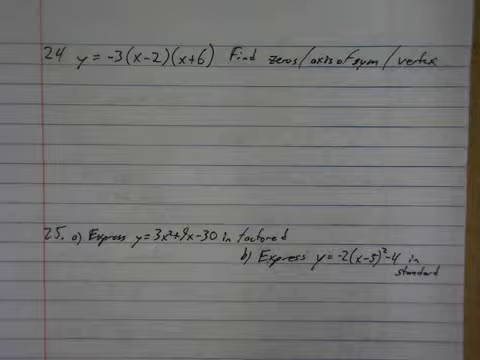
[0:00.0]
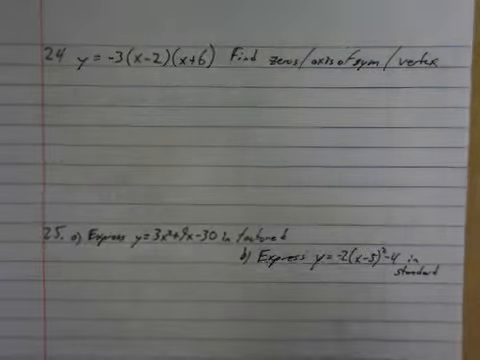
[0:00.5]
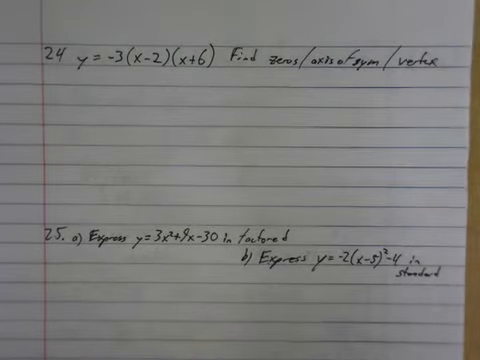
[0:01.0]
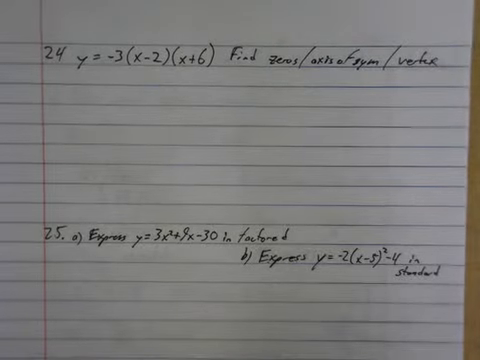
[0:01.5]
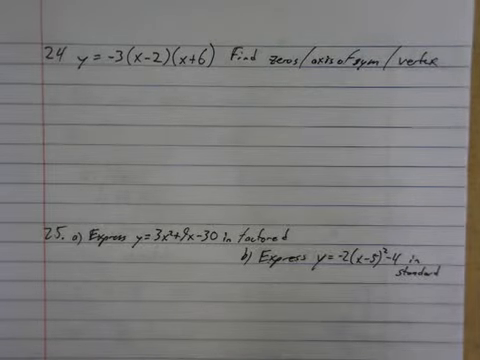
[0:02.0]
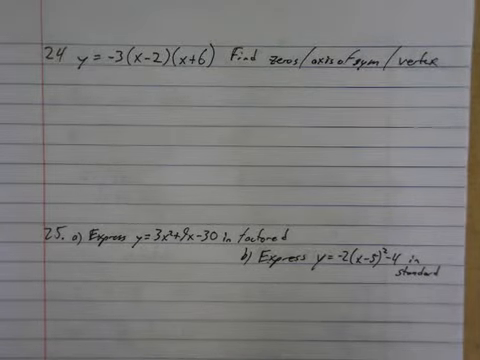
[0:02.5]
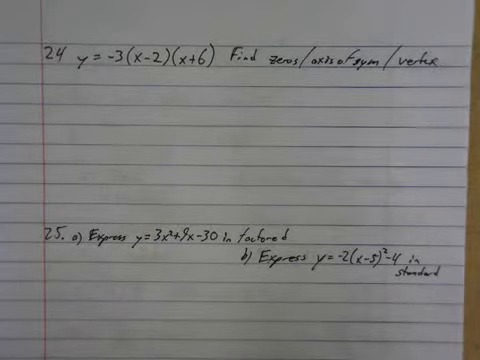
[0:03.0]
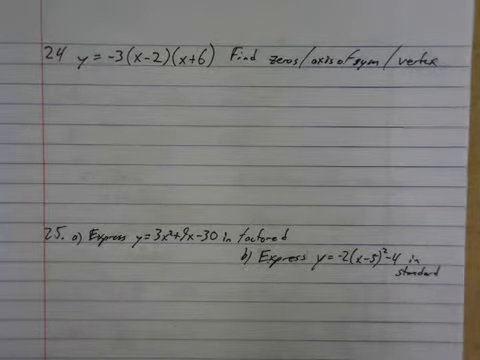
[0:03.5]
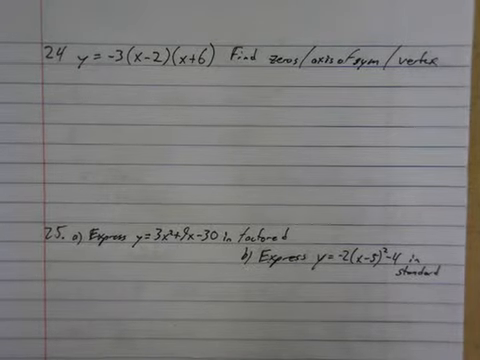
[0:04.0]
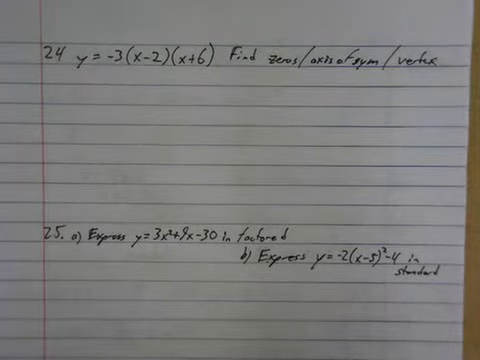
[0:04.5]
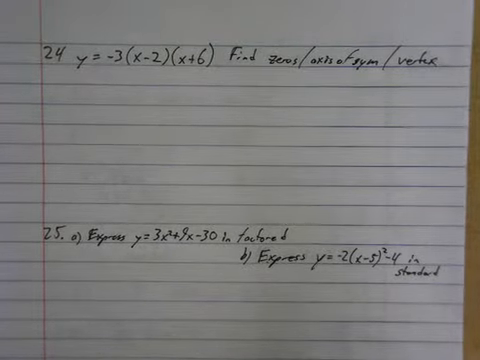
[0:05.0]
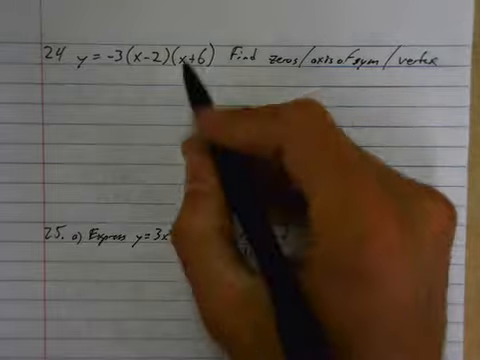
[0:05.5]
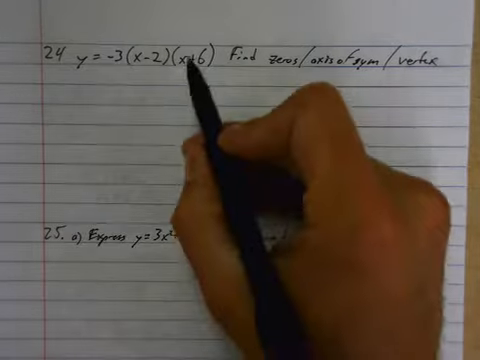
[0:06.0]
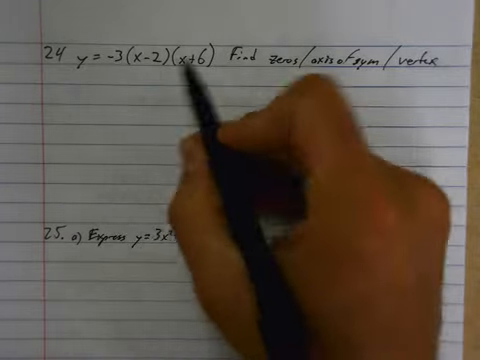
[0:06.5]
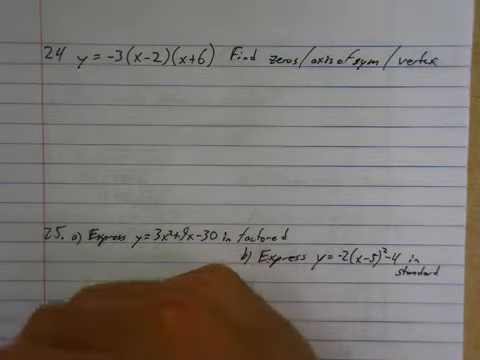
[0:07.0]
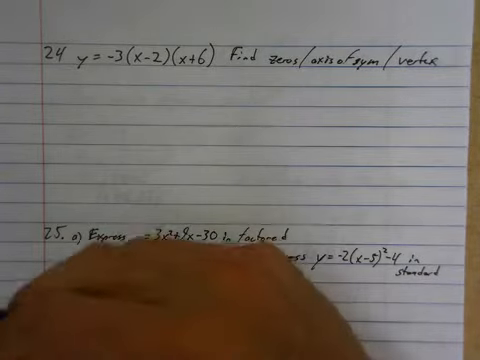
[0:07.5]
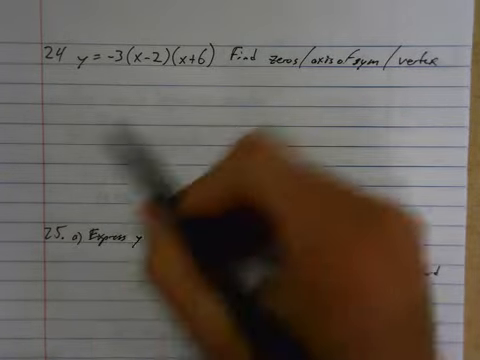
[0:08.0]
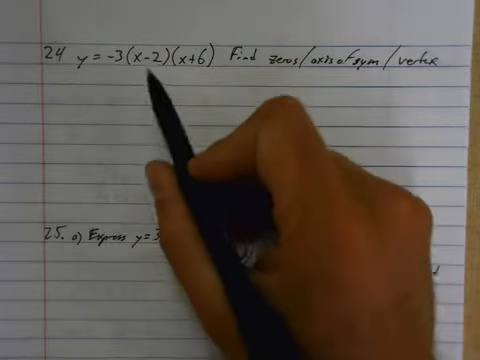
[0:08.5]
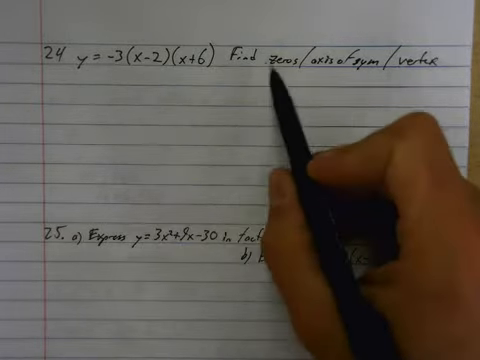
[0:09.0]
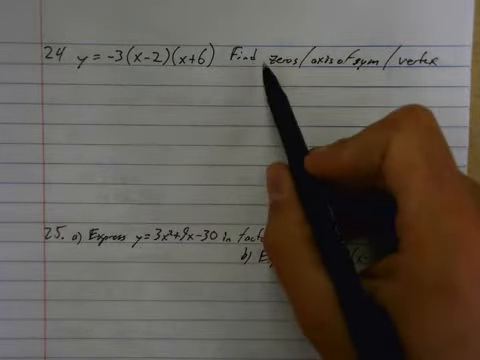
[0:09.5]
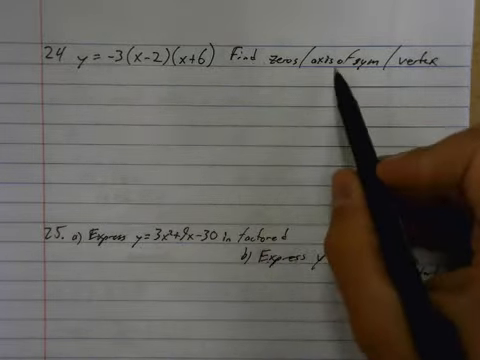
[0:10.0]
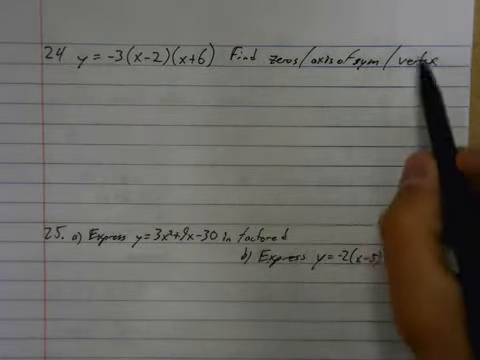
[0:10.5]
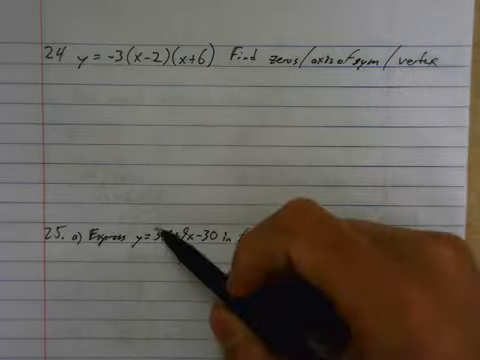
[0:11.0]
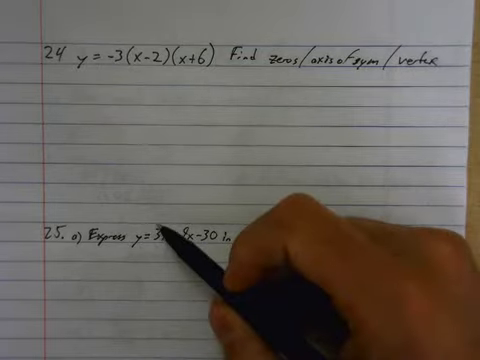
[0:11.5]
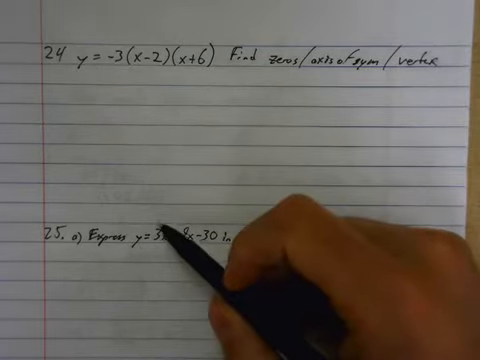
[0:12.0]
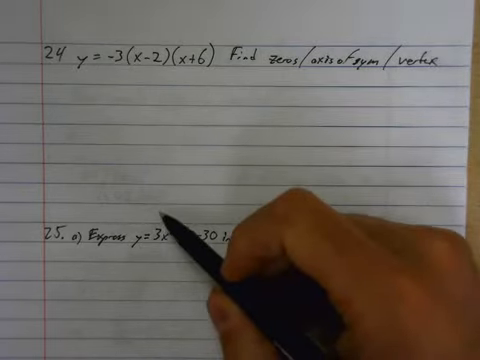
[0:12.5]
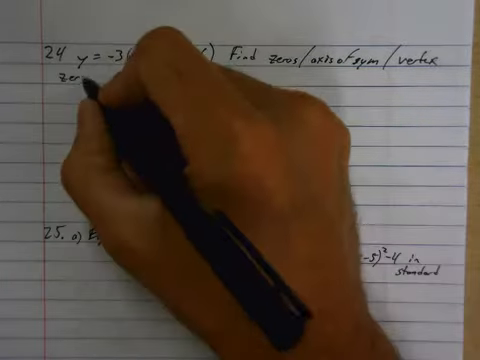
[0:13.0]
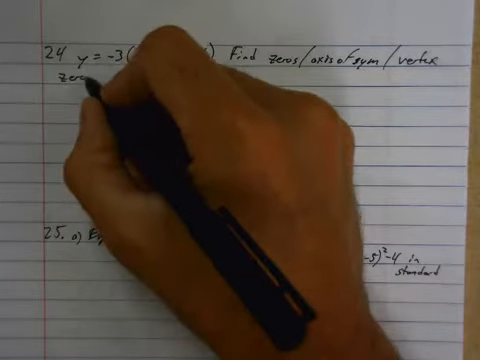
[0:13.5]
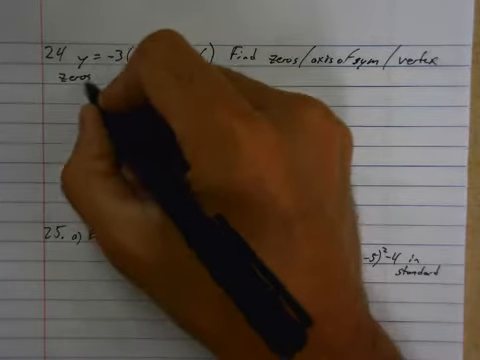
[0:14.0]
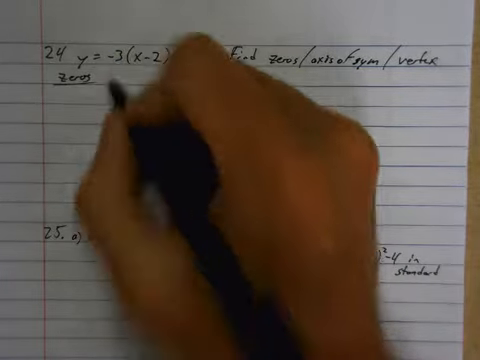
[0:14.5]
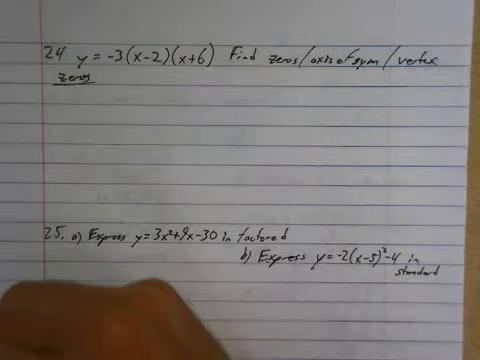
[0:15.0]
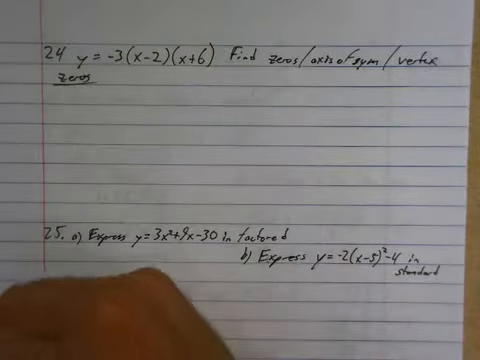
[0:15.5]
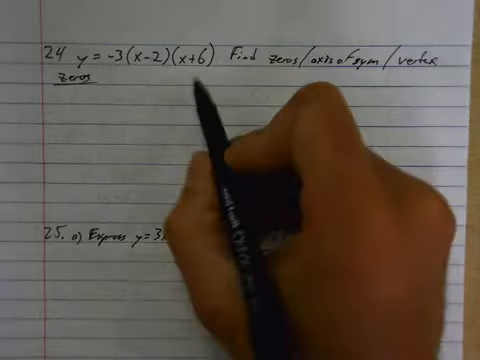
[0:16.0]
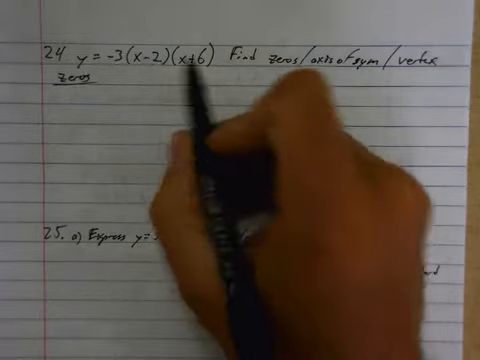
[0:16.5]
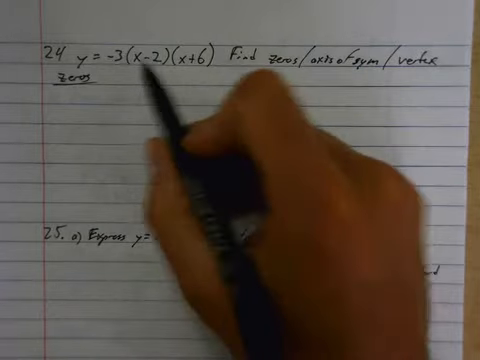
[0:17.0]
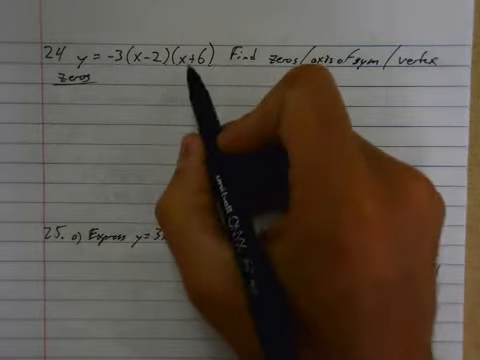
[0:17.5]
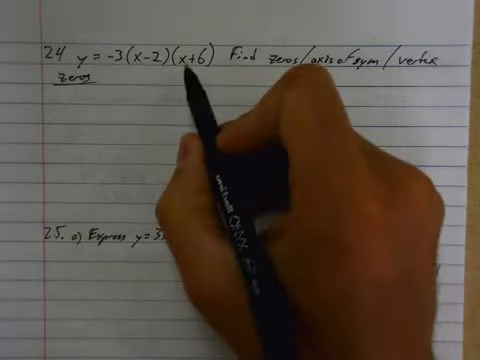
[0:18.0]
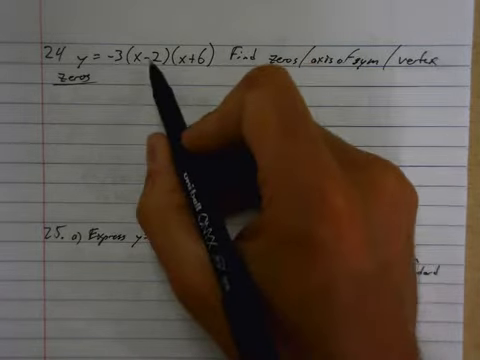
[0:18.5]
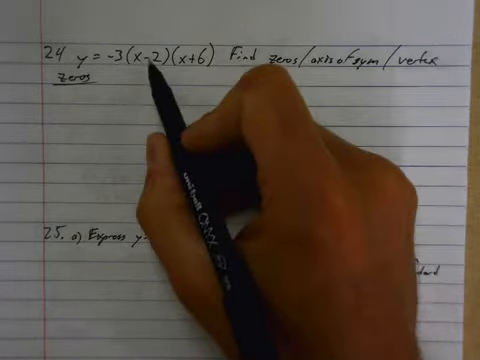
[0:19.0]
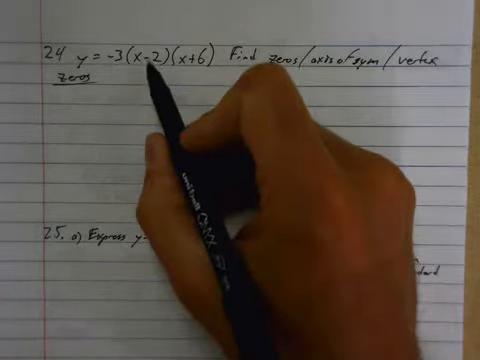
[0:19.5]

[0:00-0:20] The video begins on what looks to be a piece of lined paper, like binder paper, with many lines. On the first line is written "24 y = -3(x - 2)(x + 6) find zeros /". At the bottom of the page there is text beginning "24a express y = 3x" and a part "b) express y = -2(x -" ending "in standard". A hand holding a black pen appears, pointing at the different things and at each of the solutions, then writes the word "zeros" below the number 24 and underlines it. The pen points at x - 2 and x + 6 as the person works on the problem. The handwriting is legible.